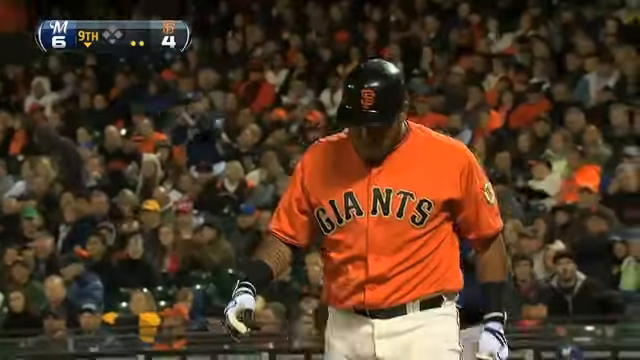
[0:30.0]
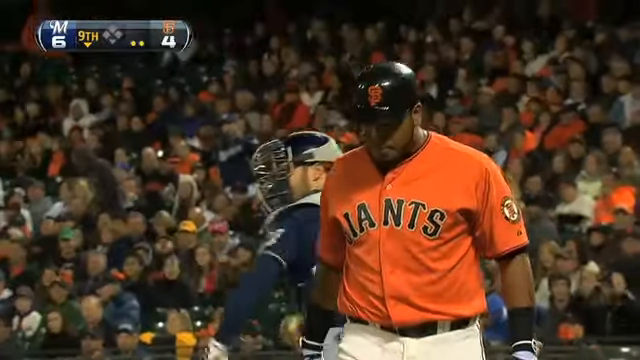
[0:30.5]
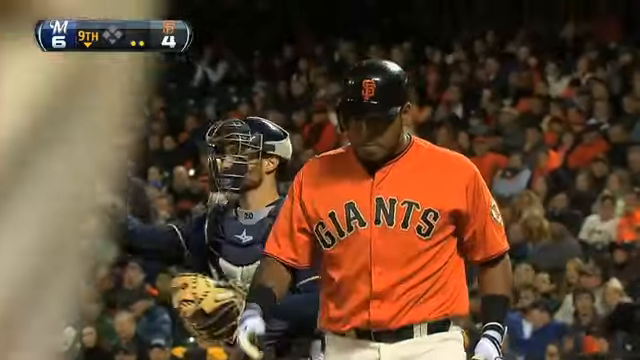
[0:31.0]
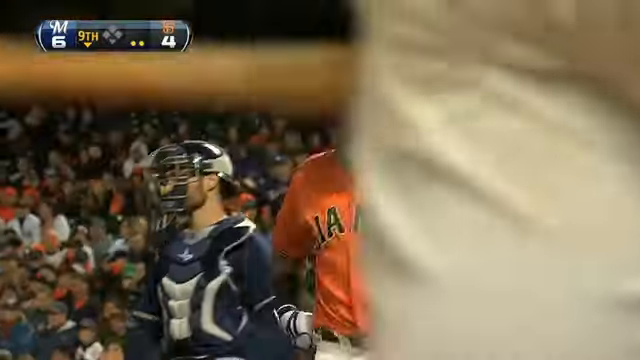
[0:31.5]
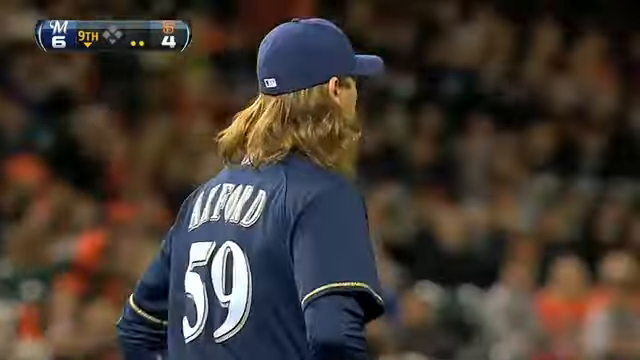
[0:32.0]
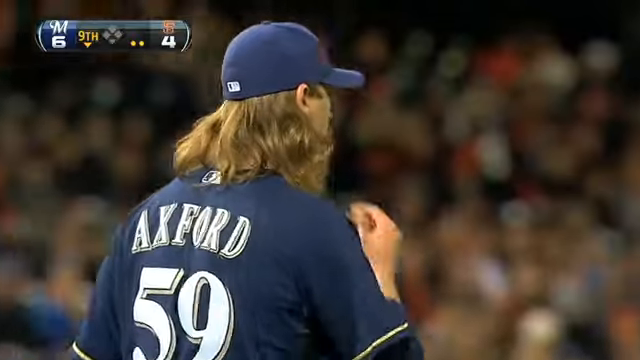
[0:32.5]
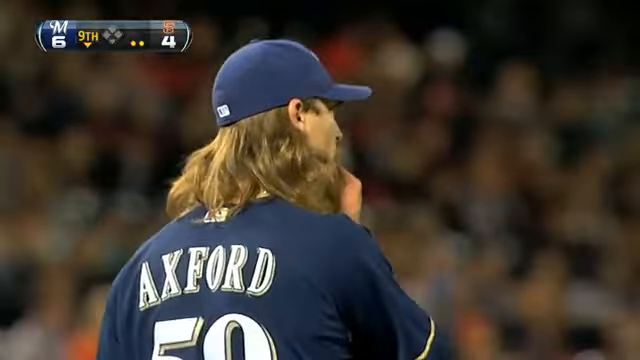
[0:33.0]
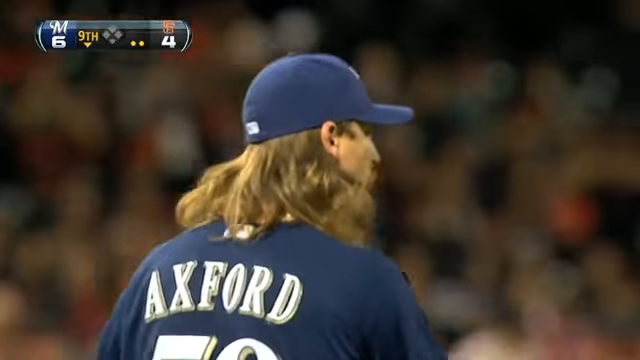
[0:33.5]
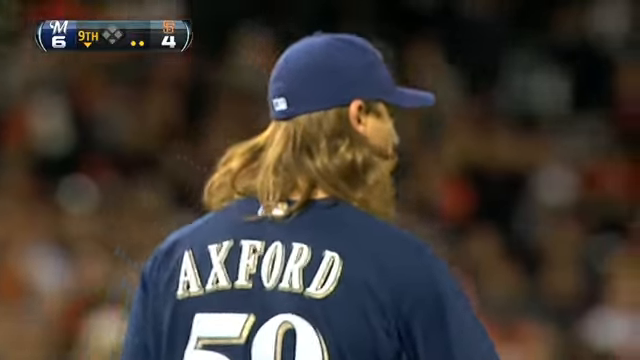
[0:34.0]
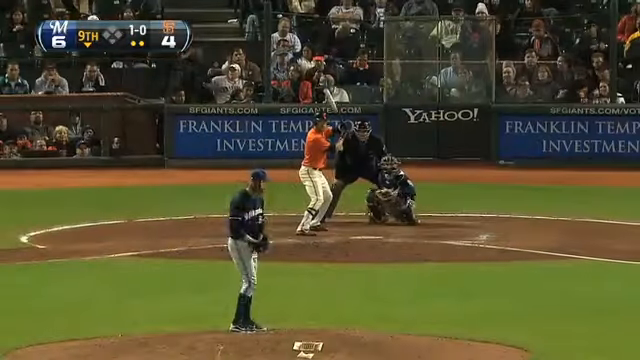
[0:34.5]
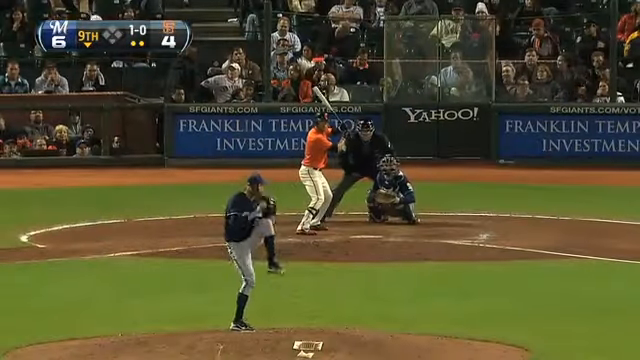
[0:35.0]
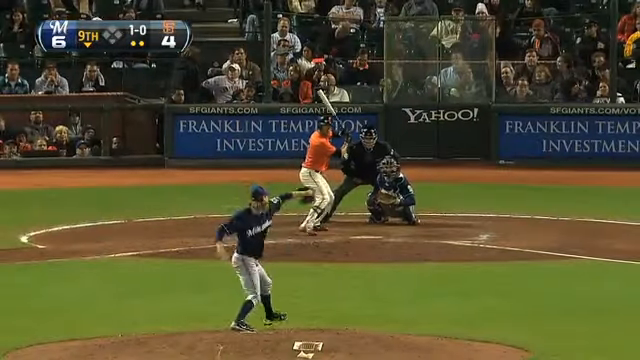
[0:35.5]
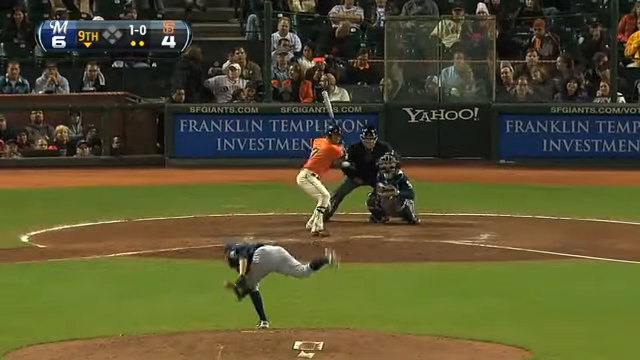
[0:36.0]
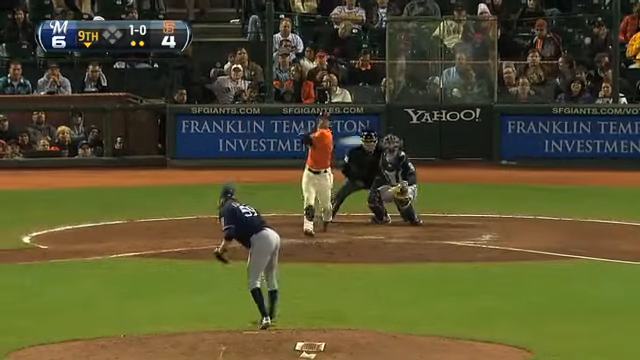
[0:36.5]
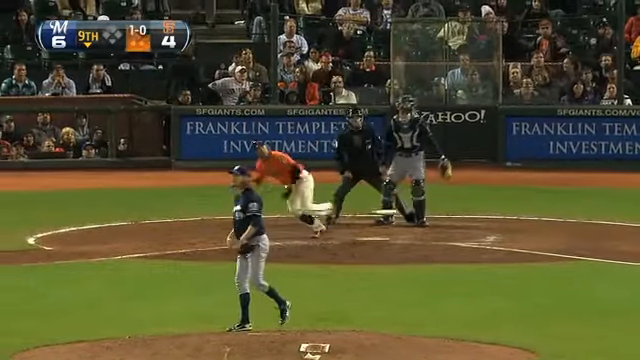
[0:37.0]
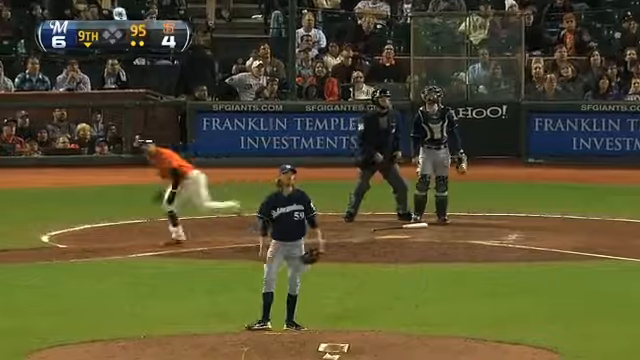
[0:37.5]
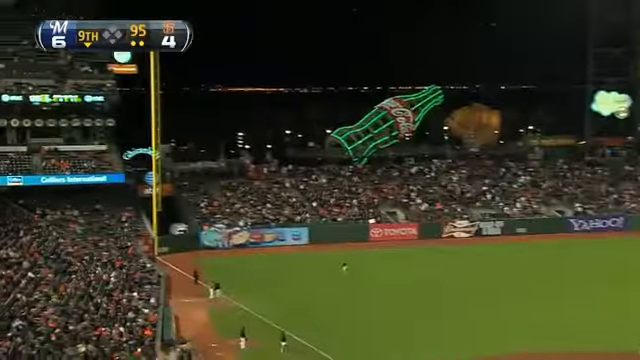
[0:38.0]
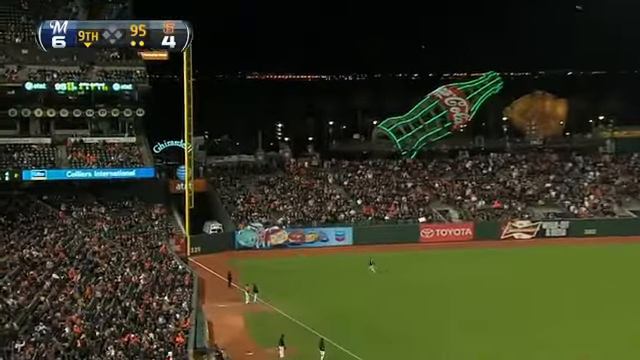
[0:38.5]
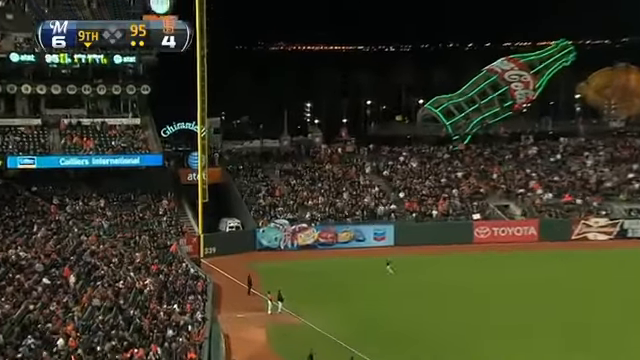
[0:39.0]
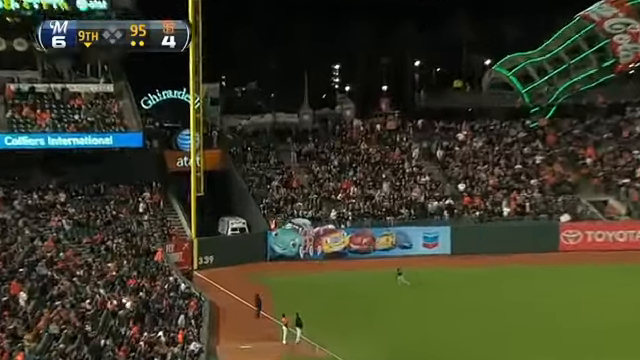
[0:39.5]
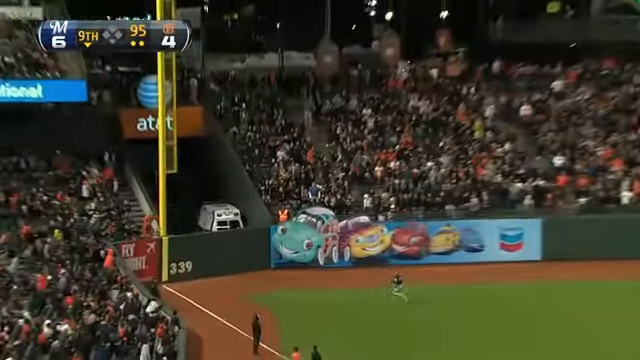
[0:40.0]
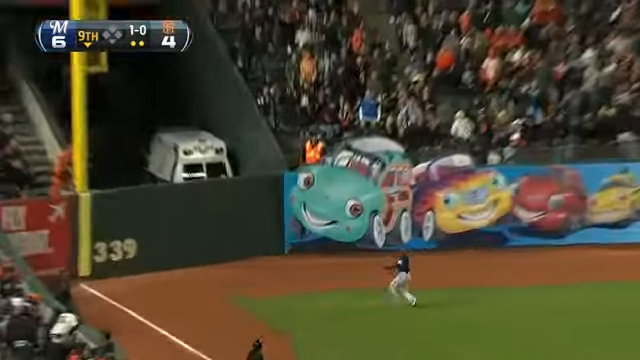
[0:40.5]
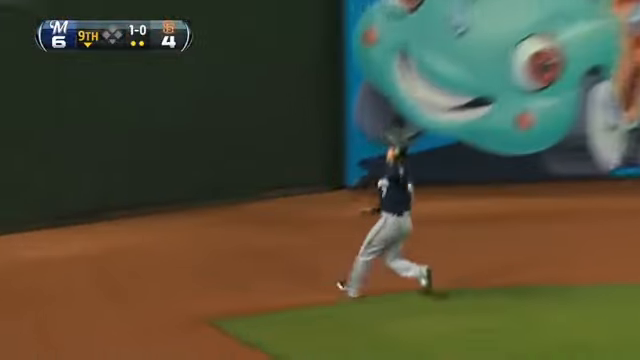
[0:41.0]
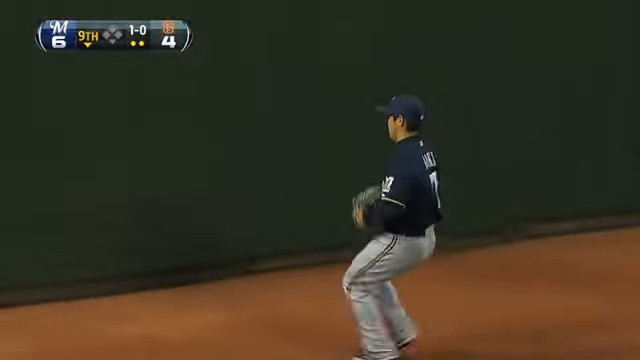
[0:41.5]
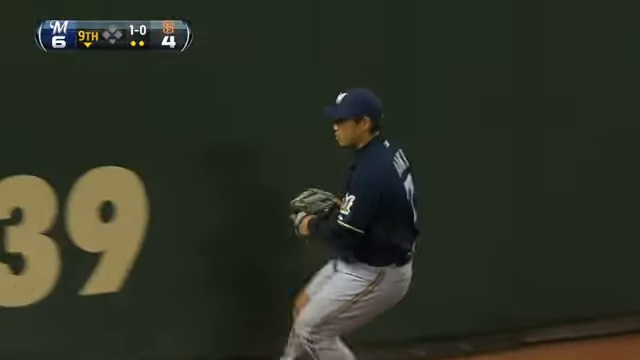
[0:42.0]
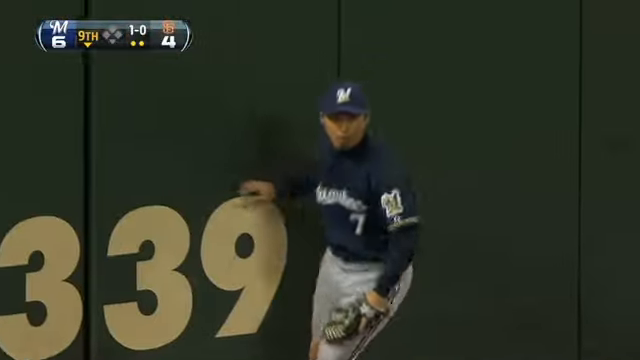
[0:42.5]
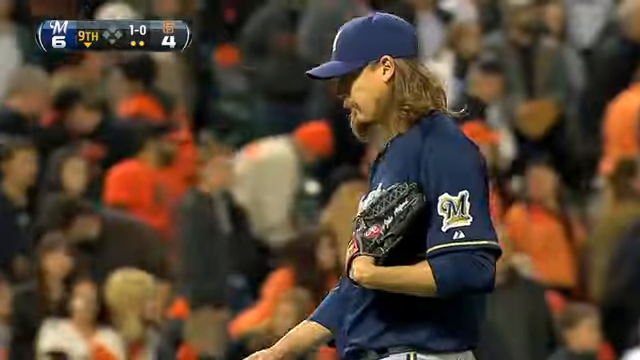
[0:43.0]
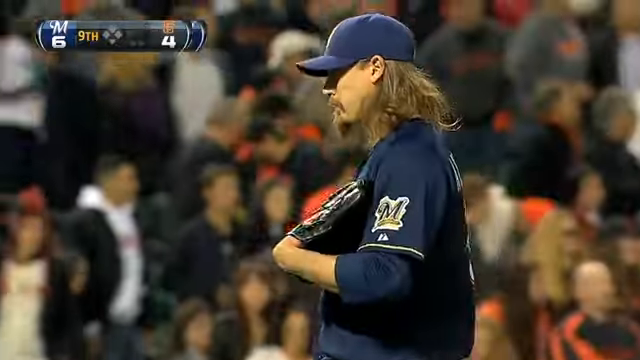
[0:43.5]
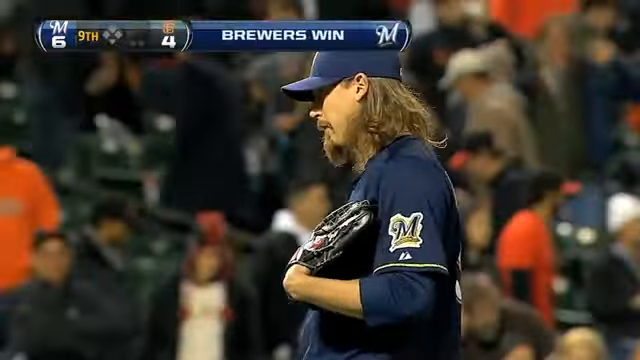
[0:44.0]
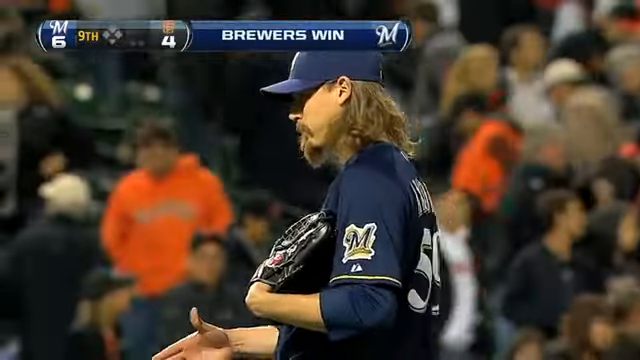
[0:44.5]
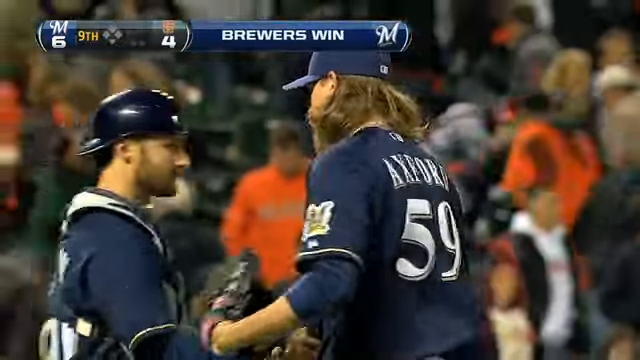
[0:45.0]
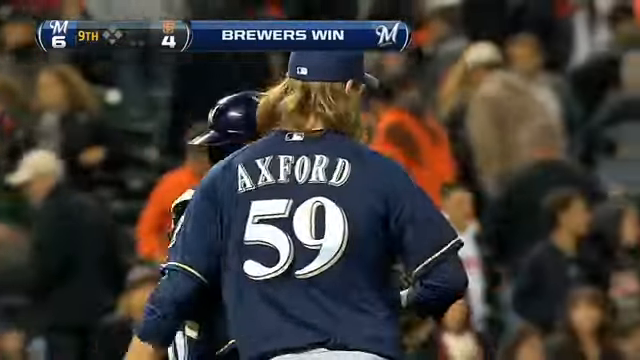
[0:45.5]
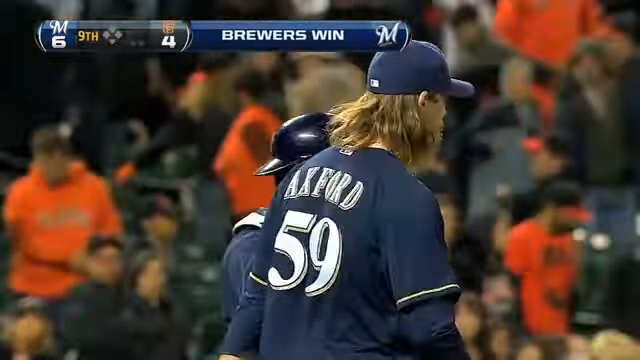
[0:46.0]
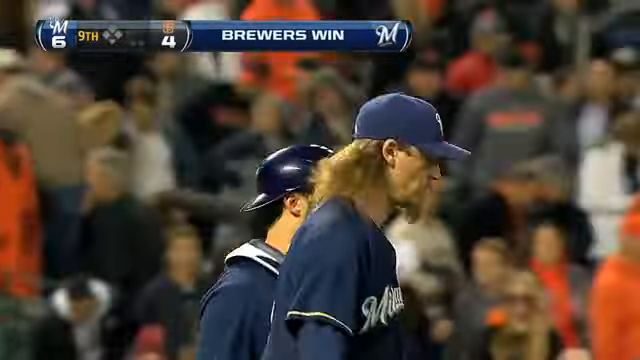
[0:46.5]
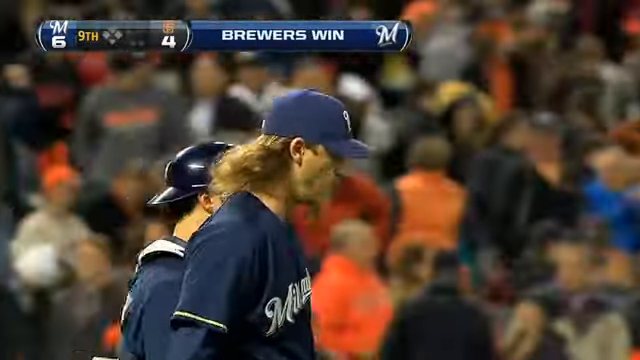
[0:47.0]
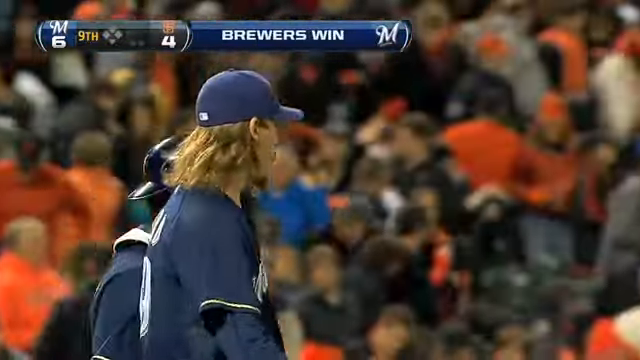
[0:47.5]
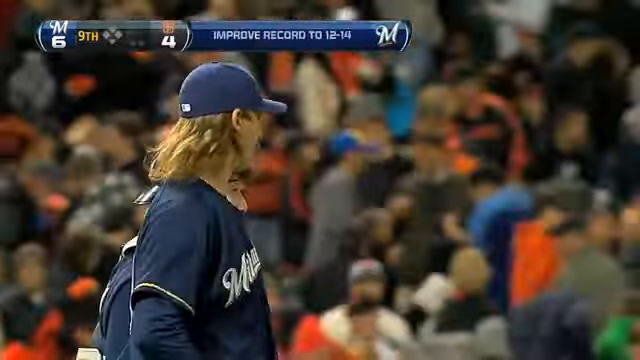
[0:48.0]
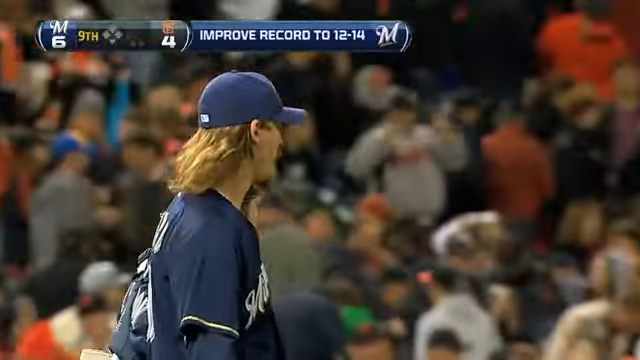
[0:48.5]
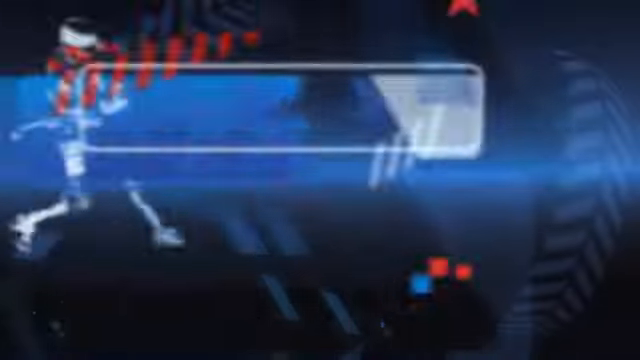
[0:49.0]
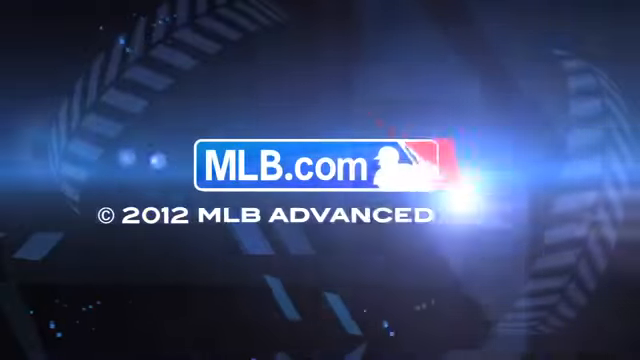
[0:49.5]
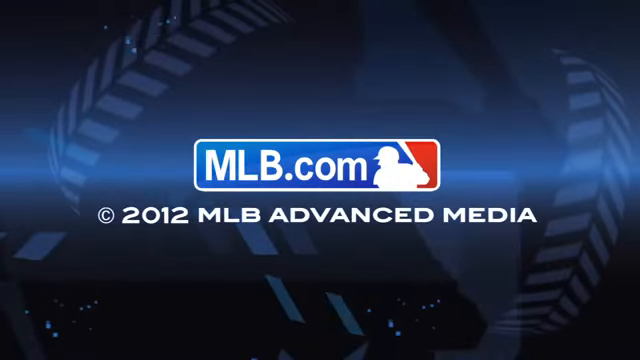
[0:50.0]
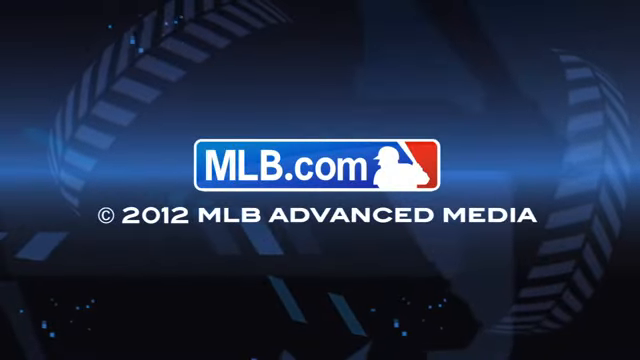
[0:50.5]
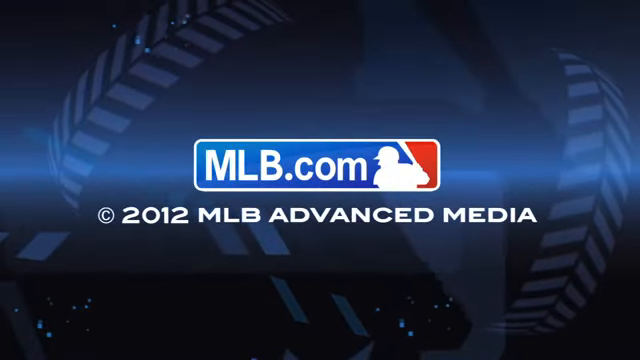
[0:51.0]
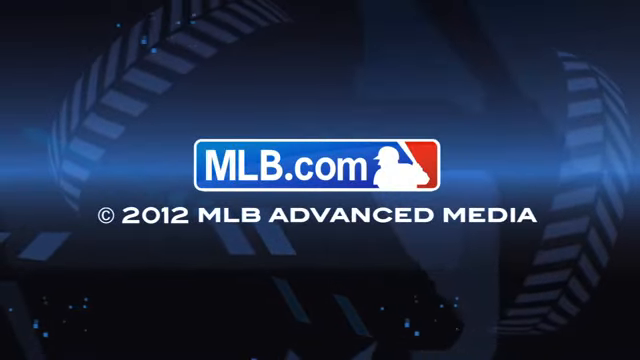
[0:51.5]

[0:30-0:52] A San Francisco Giants player is shown from a zoomed-in angle walking towards the camera, then the view returns to Axford, the pitcher, seen from behind as he continues to walk. For another pitch, he lifts his left leg, holds his right hand in the glove on his left hand, puts his leg down, winds his right arm back, and throws. The batter in the orange jersey smacks the ball hard, and it goes right into an outfielder's glove as he runs very fast to the back corner of the field. On-screen text reads "Brewers win," showing the team is actually the Milwaukee Brewers. Axford is then seen from a side angle shaking the hand of a teammate, and the two are shown from the side walking to the right. The video ends on a baseball screen with a blue background reading "MLB.com 2012 MLB Advanced Media."